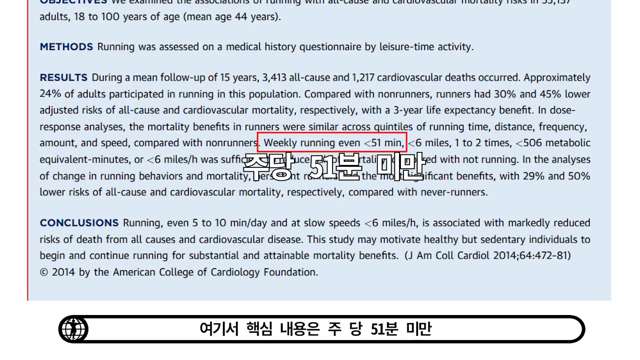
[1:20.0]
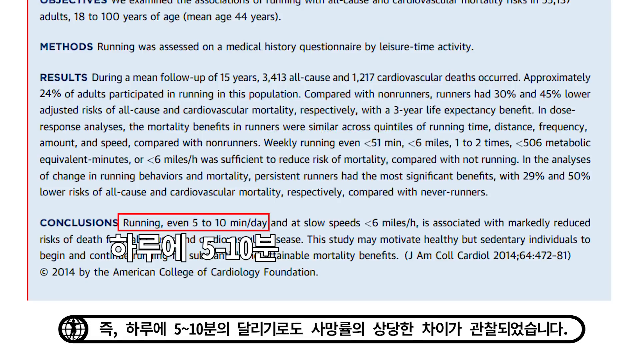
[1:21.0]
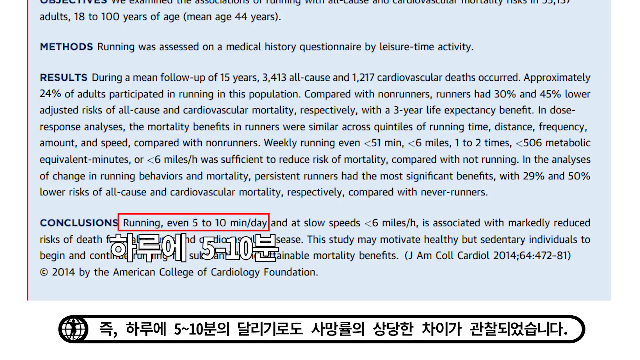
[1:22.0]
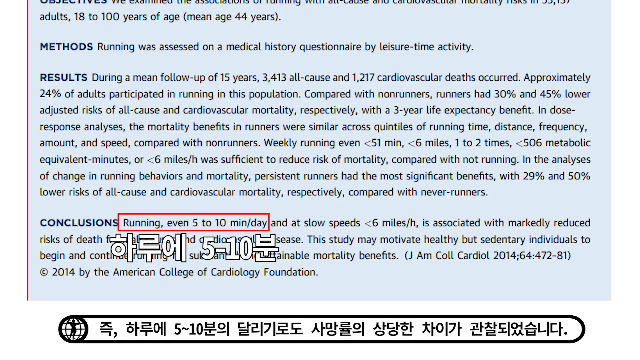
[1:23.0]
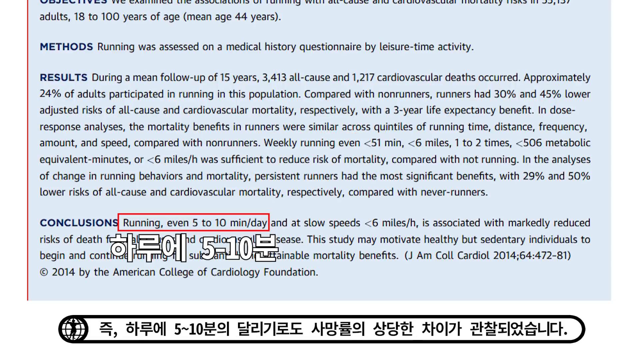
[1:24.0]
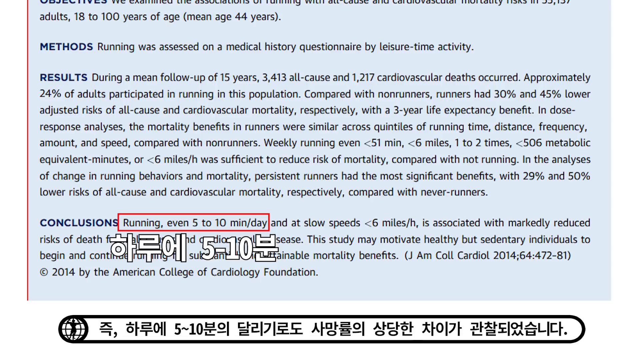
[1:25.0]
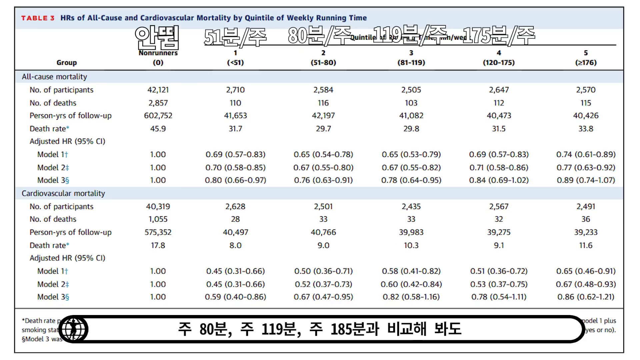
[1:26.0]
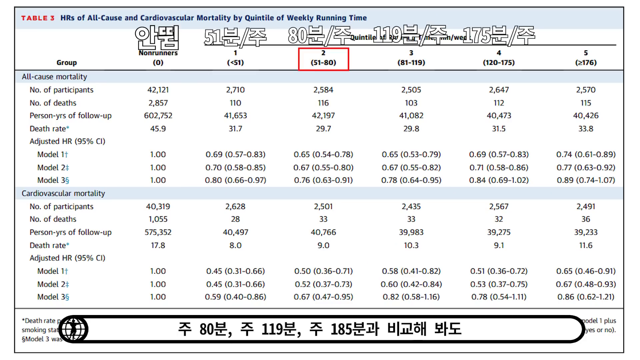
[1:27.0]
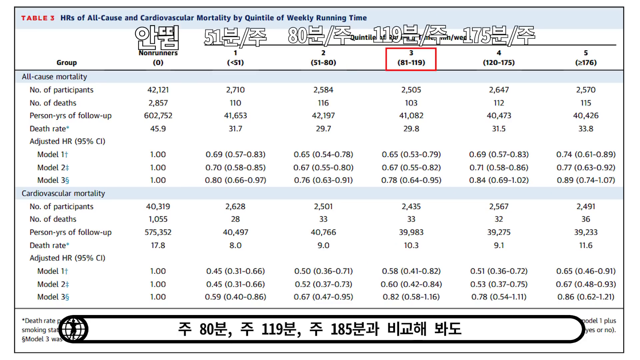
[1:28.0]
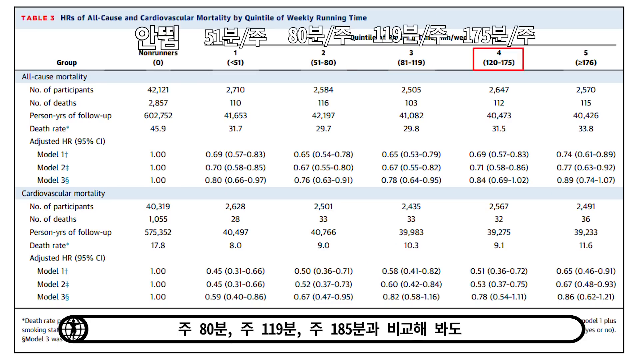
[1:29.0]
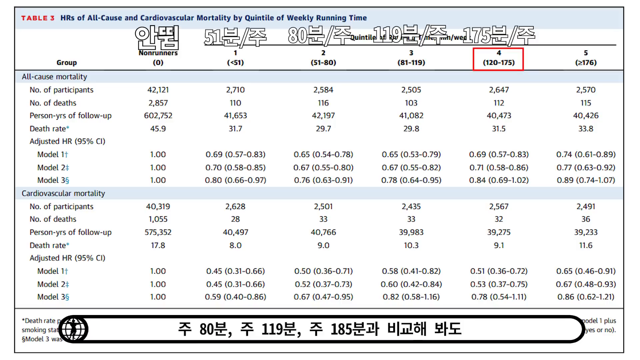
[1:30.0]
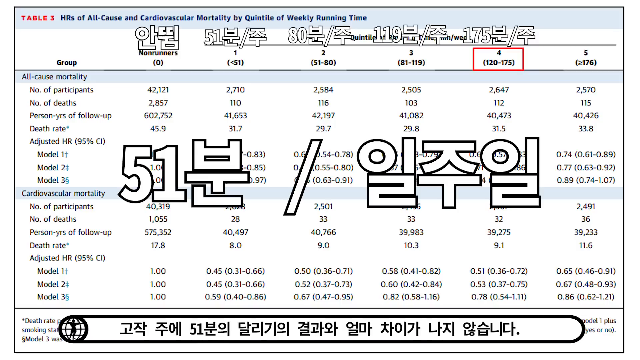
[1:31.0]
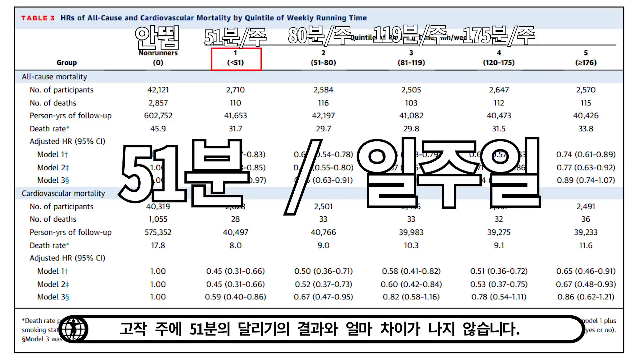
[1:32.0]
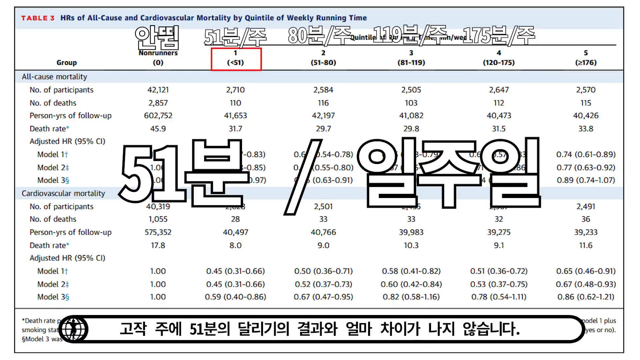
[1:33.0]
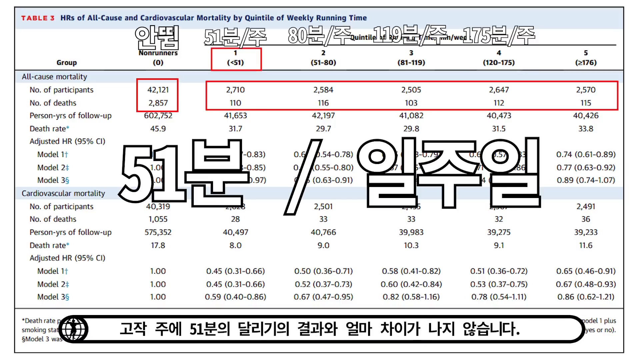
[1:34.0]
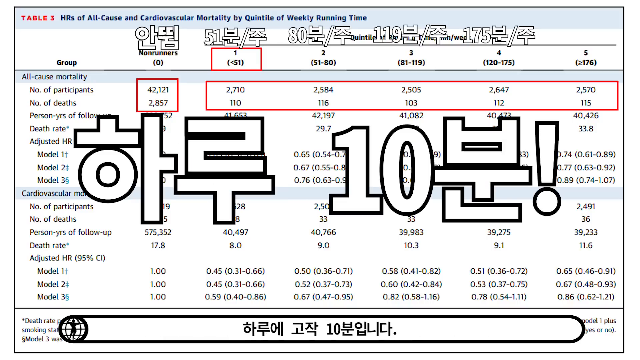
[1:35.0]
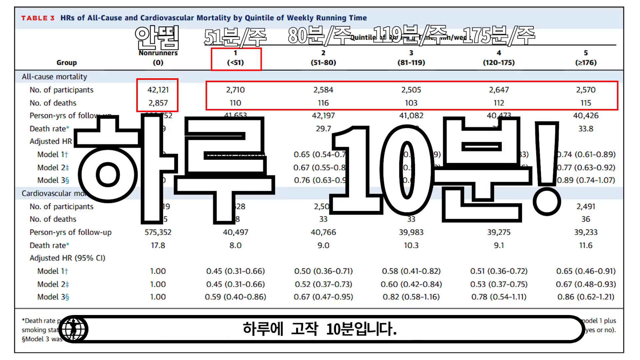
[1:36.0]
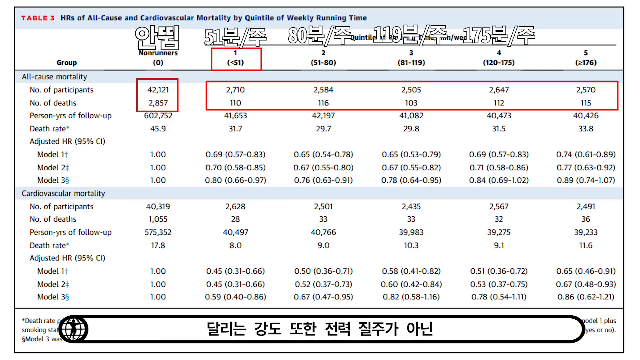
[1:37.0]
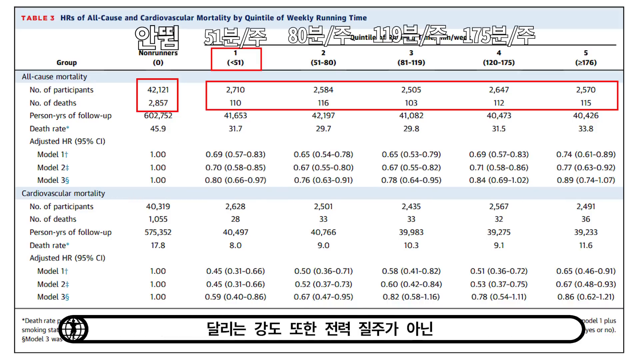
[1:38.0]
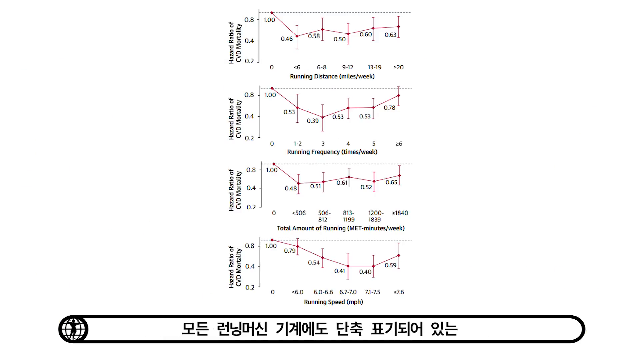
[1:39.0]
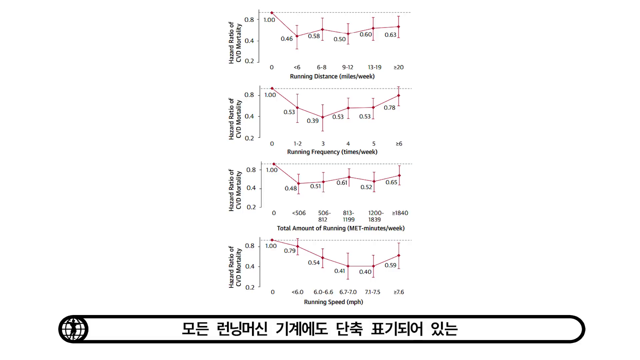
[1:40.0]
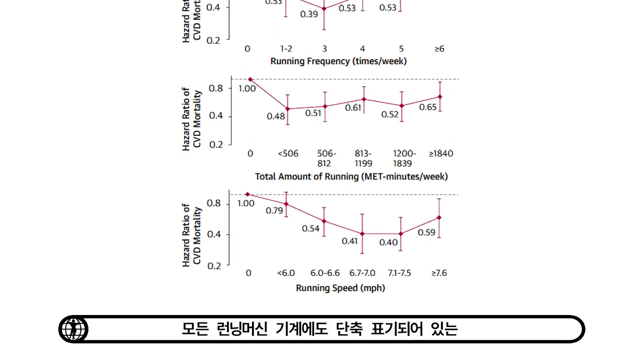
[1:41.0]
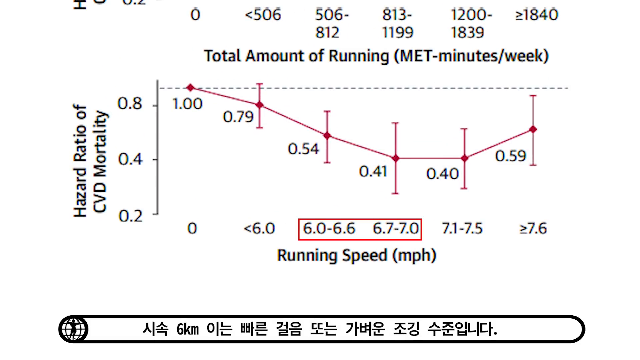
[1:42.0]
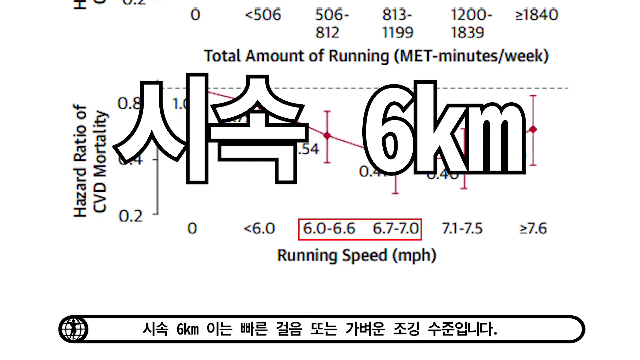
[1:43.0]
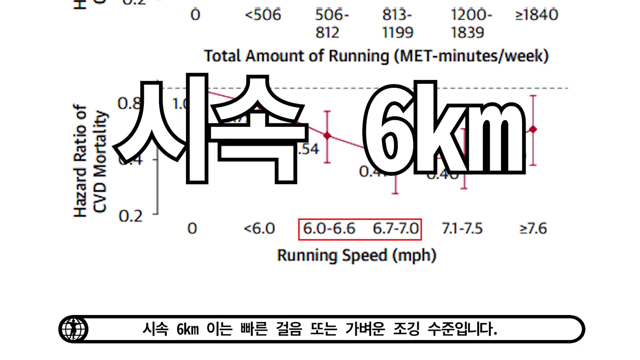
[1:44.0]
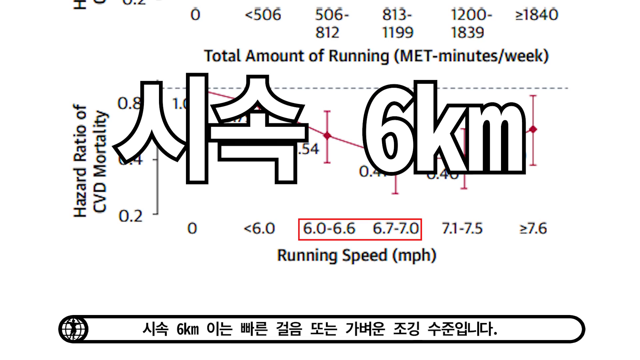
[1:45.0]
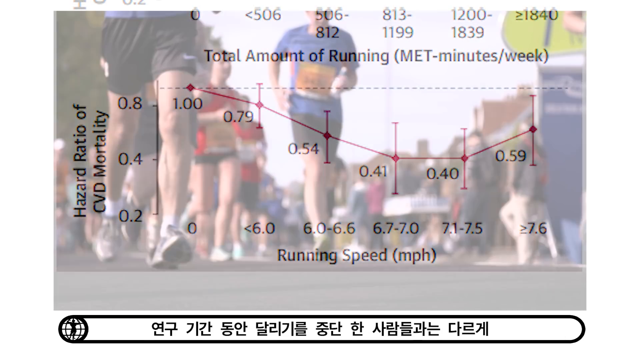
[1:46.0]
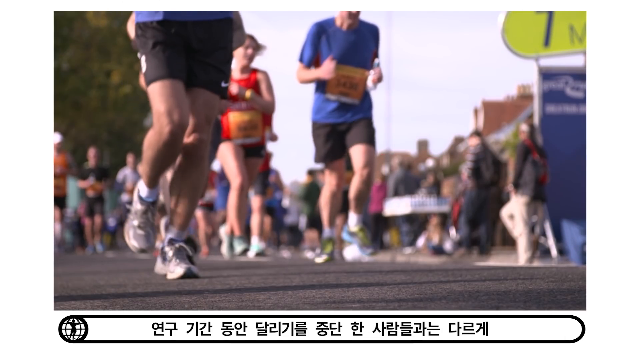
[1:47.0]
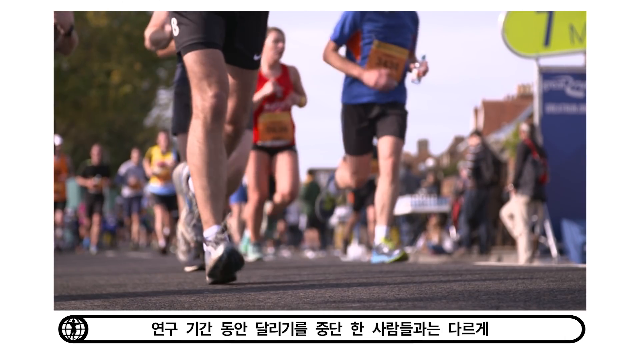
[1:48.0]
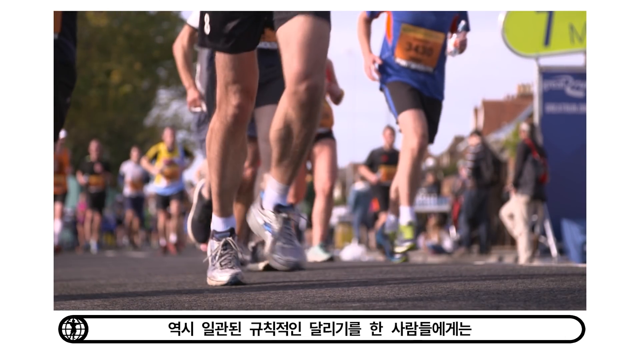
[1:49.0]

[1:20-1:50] Written text continues to show the benefits of exercise and the results comparing runners and non-runners, including cardiovascular benefits. The video then shows a chart of the mortality rate and a graph of the hazard ratio and mortality rate for running or jogging.